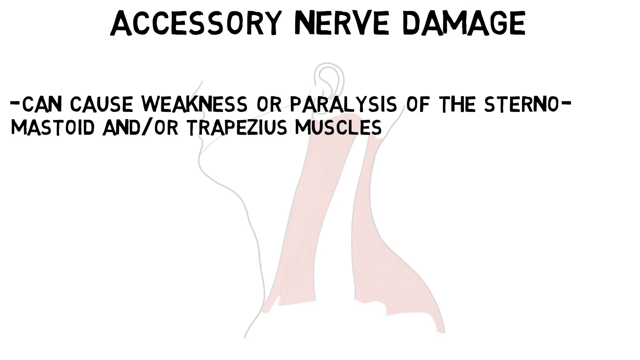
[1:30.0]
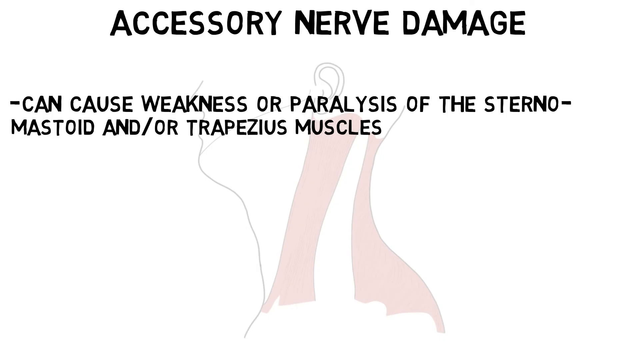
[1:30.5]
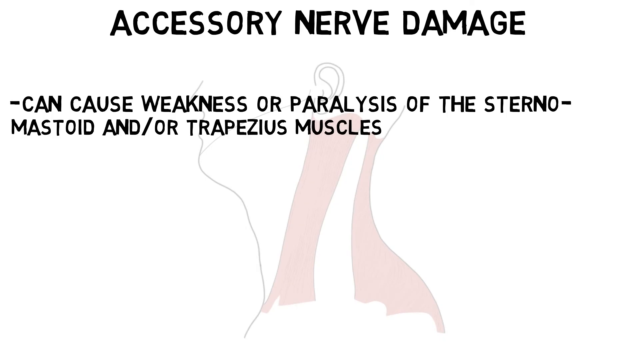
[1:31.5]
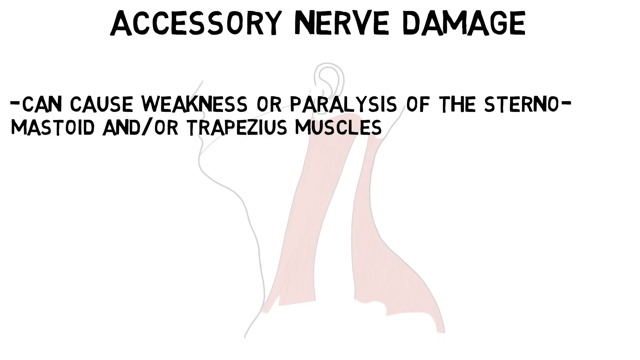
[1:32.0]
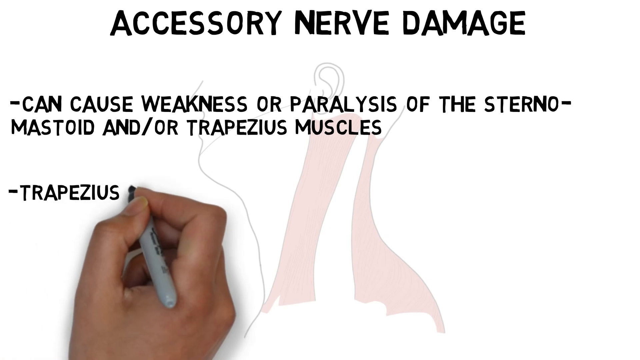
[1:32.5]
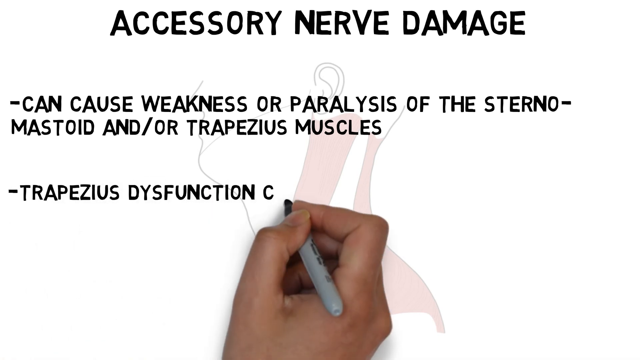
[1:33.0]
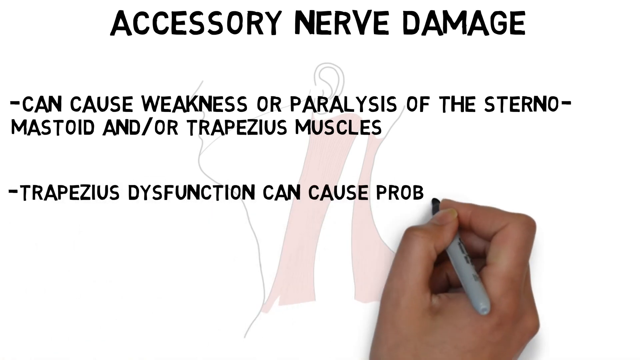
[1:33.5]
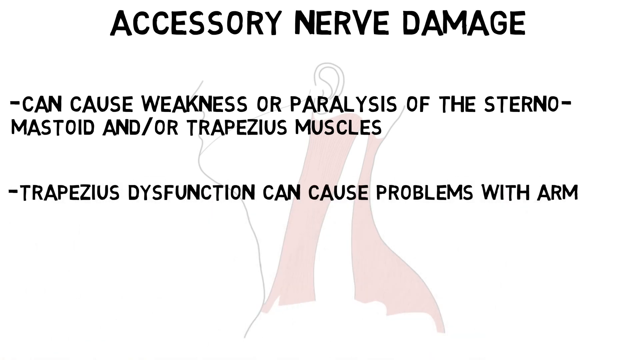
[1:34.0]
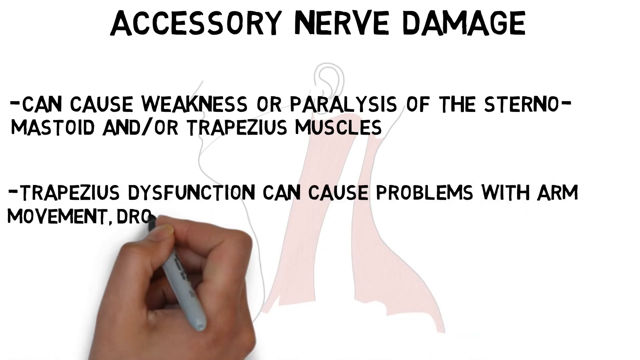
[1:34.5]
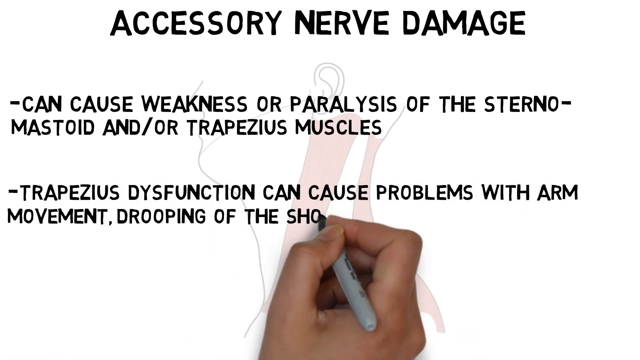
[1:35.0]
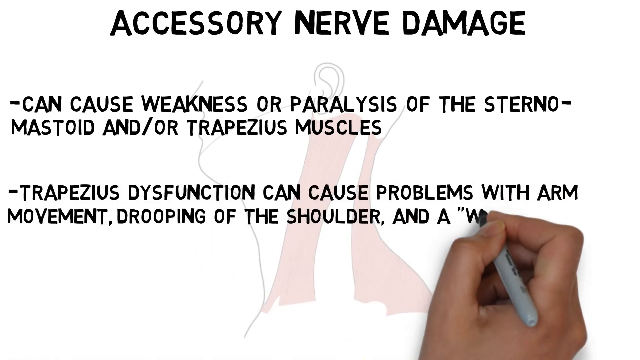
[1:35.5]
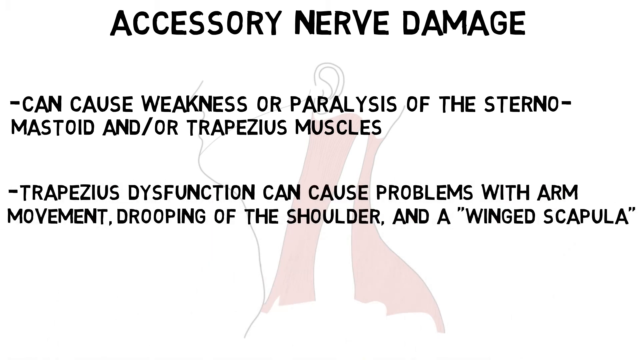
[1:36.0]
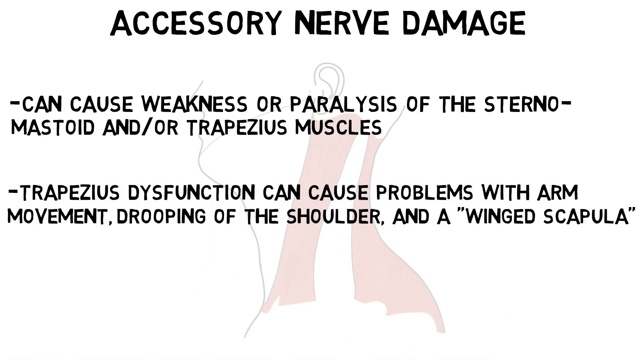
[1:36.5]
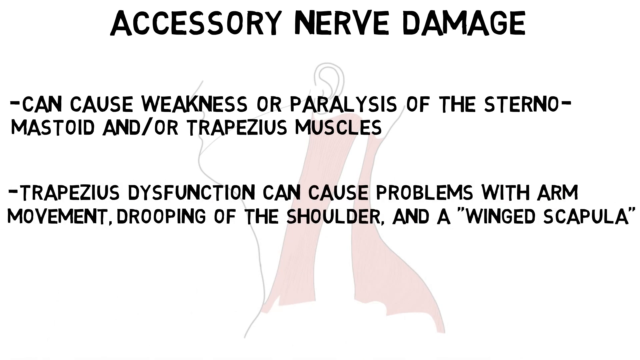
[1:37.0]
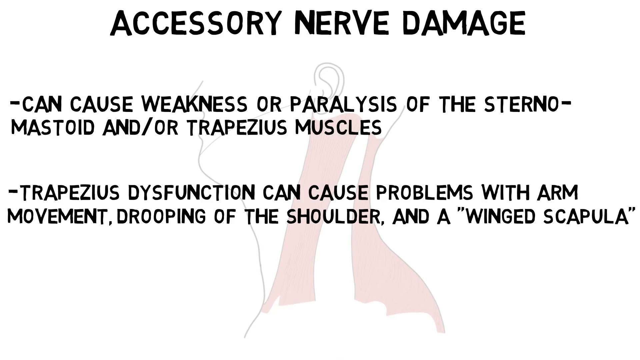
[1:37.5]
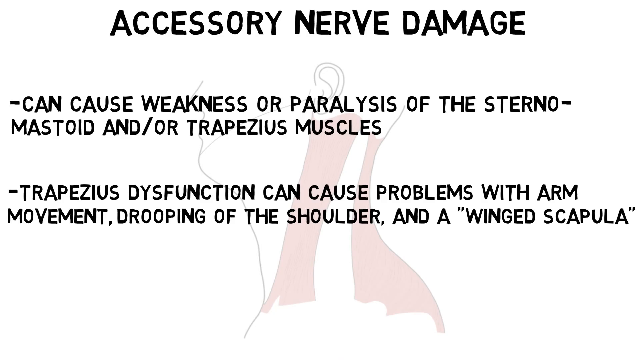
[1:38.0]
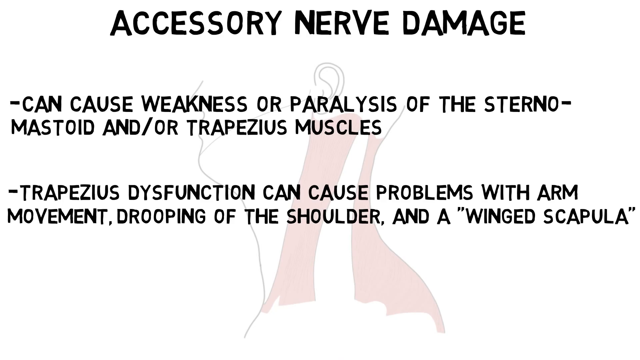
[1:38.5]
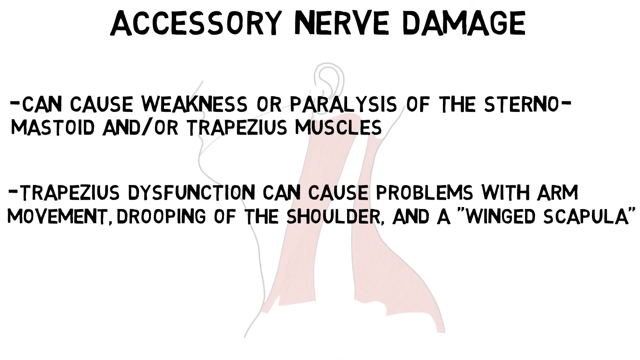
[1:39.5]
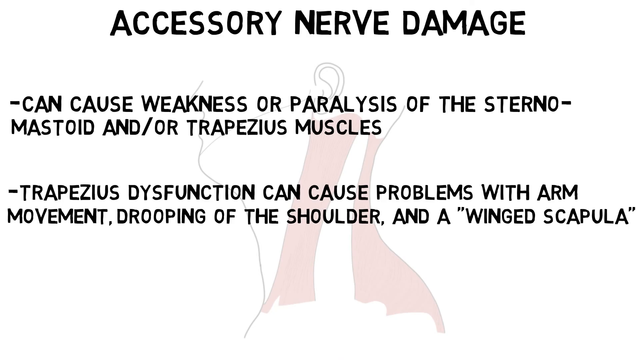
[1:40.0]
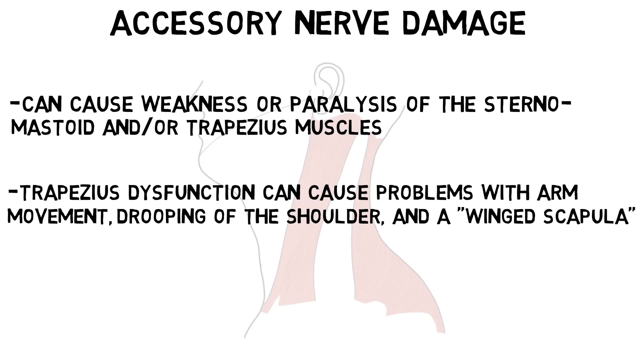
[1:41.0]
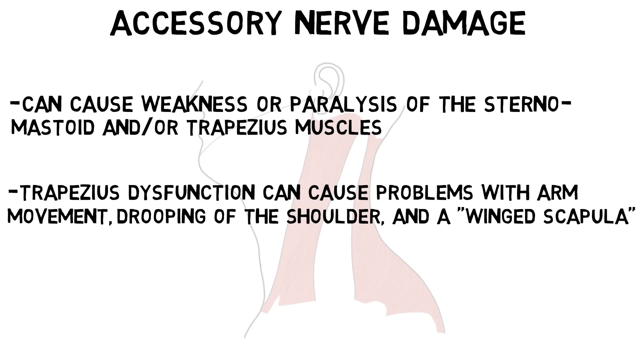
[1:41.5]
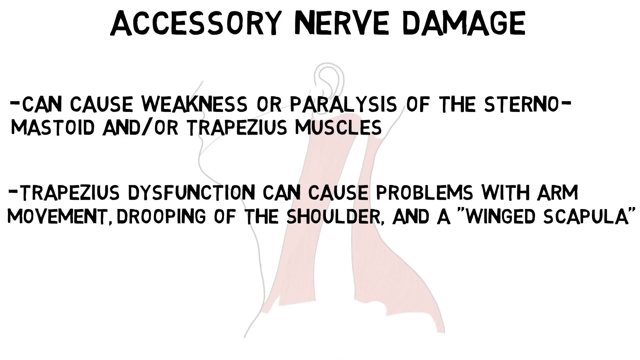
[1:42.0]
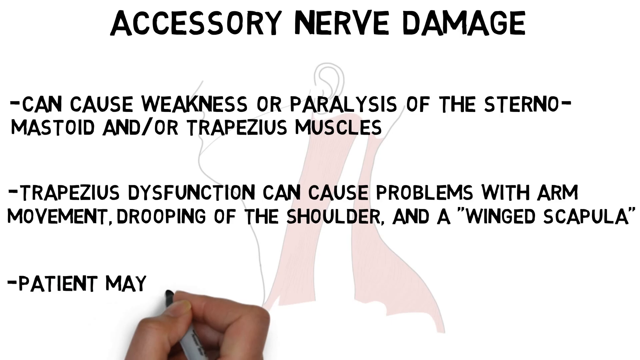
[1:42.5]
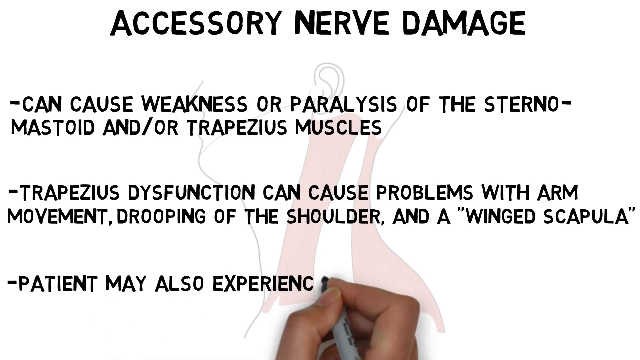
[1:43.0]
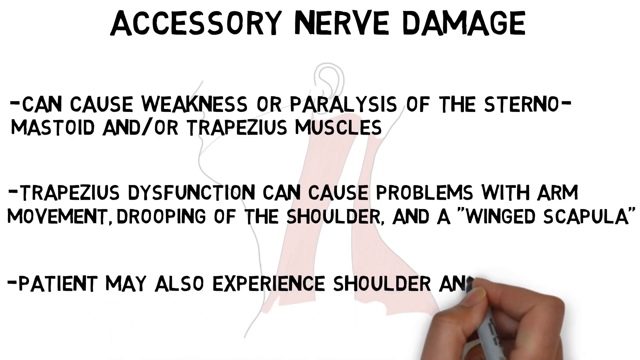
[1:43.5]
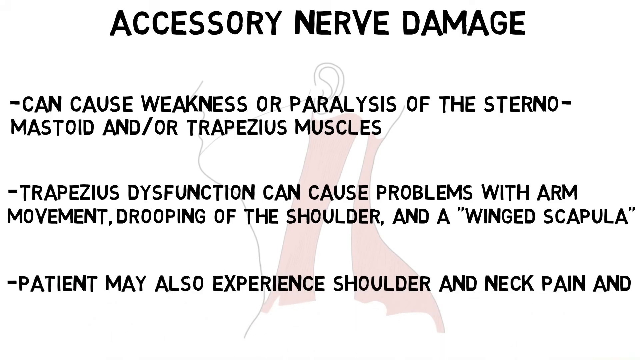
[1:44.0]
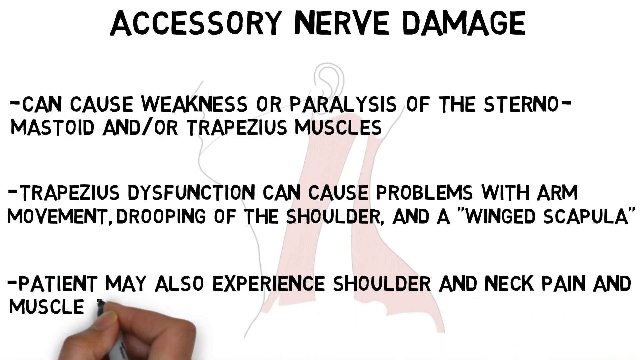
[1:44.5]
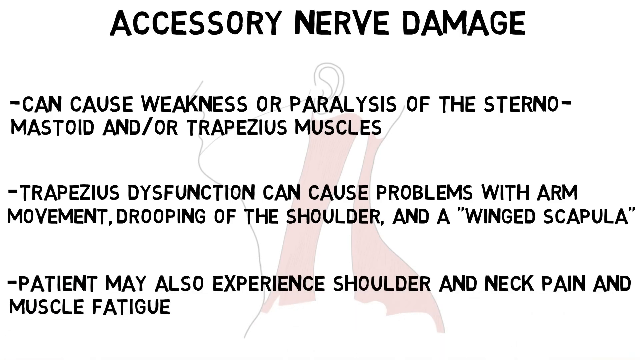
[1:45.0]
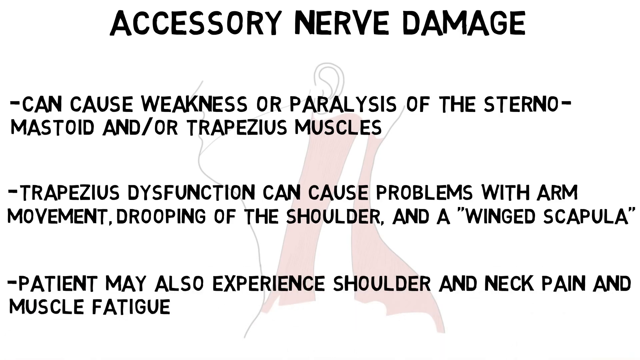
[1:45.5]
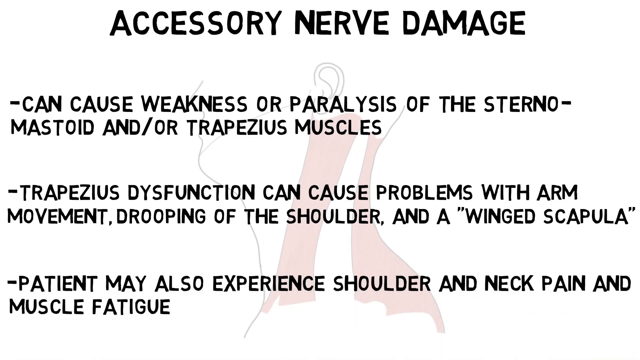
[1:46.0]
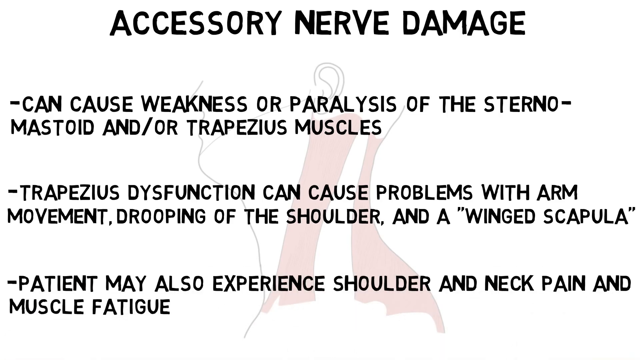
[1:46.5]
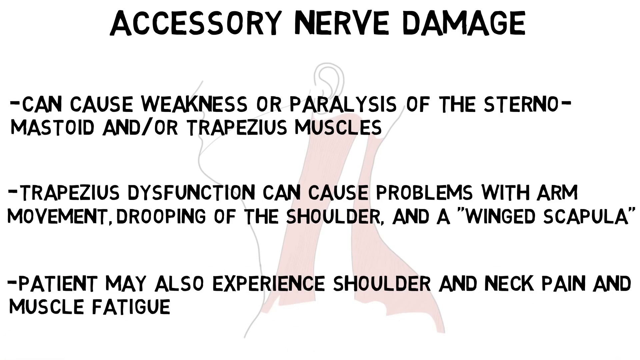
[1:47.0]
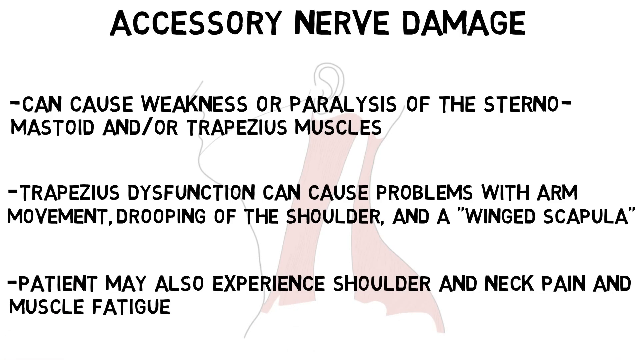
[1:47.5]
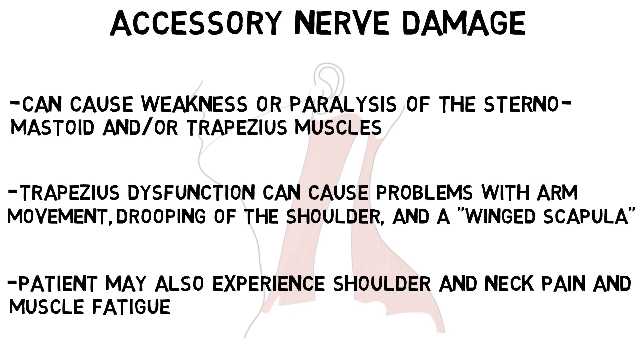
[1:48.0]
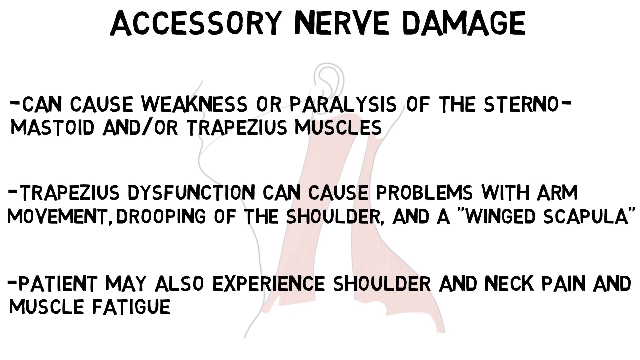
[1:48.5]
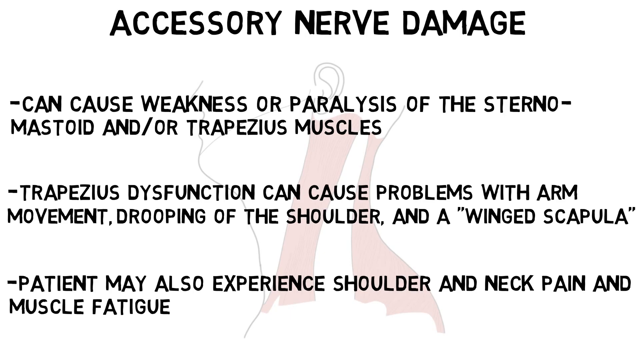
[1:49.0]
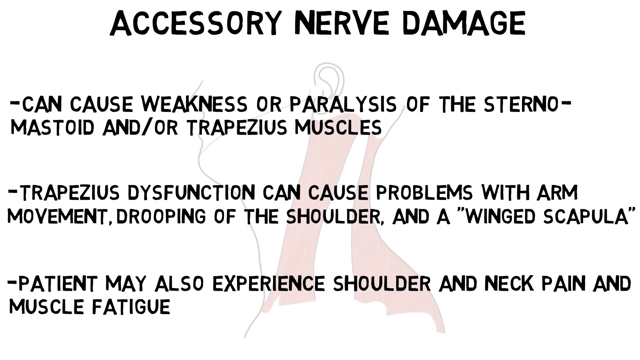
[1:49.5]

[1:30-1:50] The heading "Accessory Nerve Damage" is shown on a white background, with the writing in bold black marker. In the background is a faint outline of part of the head used earlier. The text reads: "It can cause weakness or paralysis of the Sternomastoid and or Trapezius muscles. Trapezius Dysfunction can cause problems with arm movement, drooping of the shoulder, and a 'winged scapula'. Patient may also experience shoulder and neck pain and also muscle fatigue."